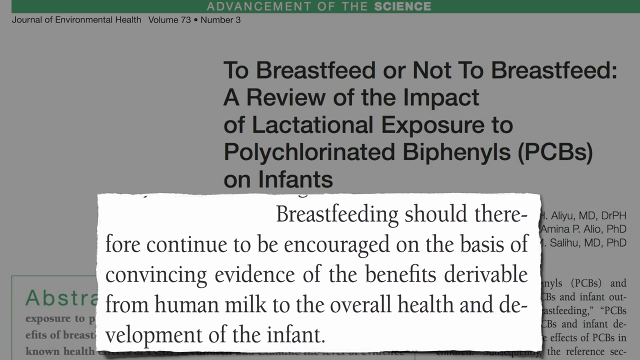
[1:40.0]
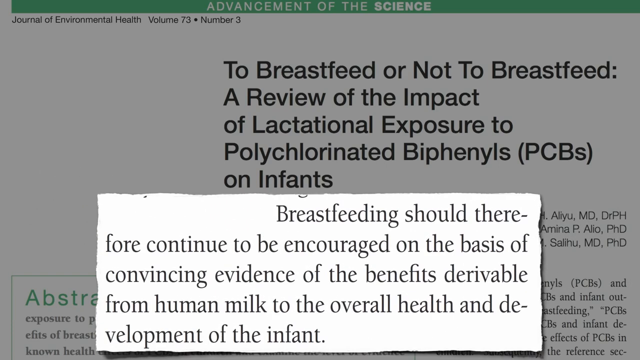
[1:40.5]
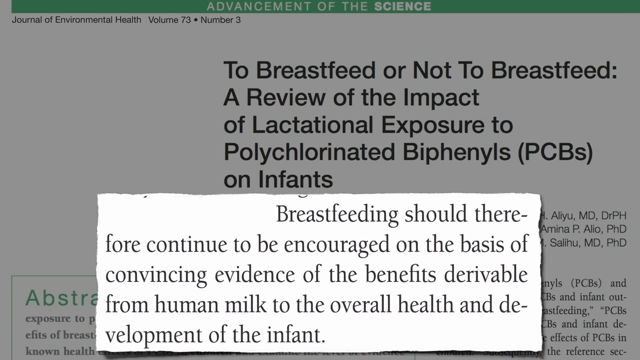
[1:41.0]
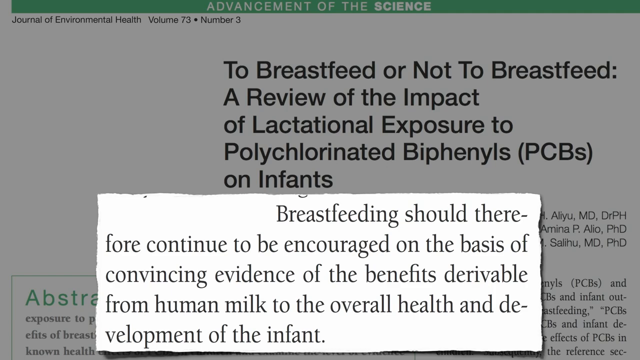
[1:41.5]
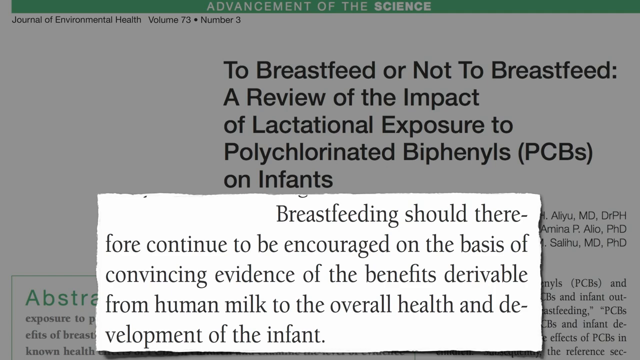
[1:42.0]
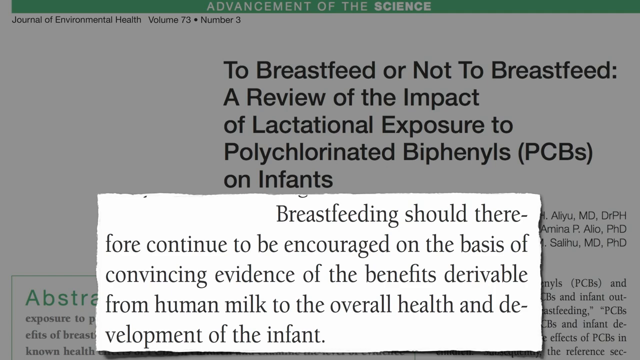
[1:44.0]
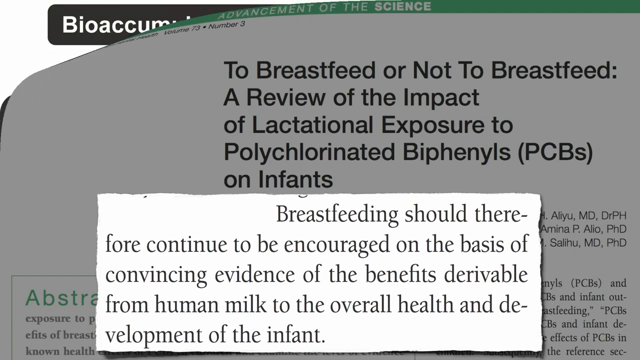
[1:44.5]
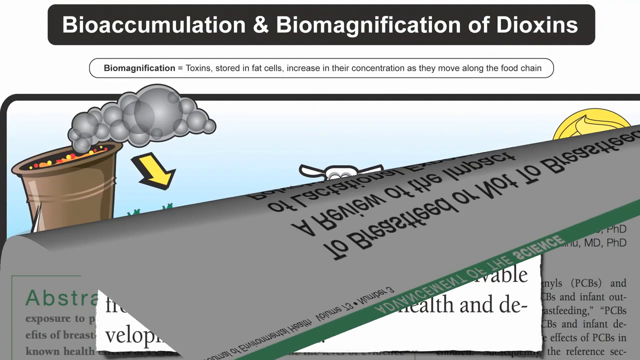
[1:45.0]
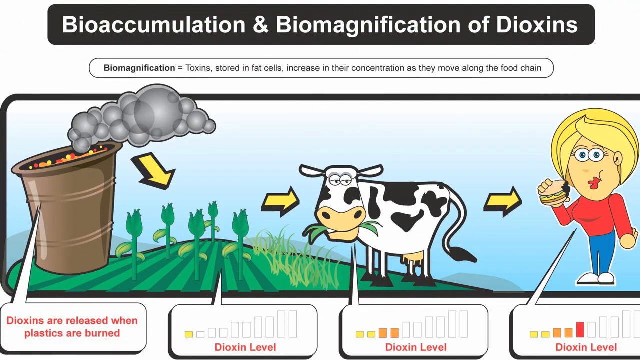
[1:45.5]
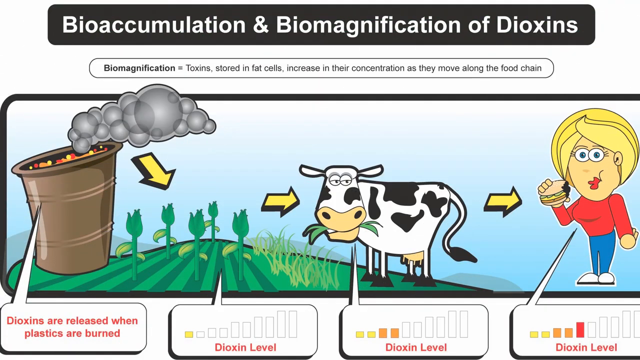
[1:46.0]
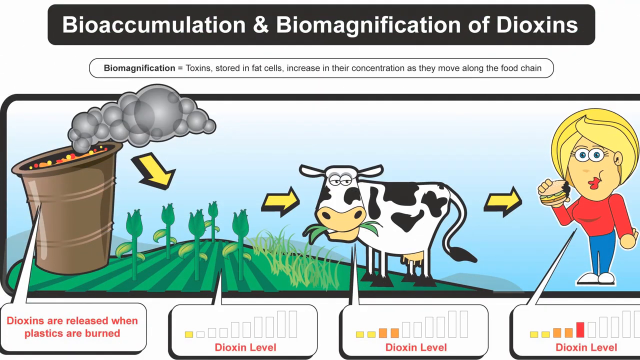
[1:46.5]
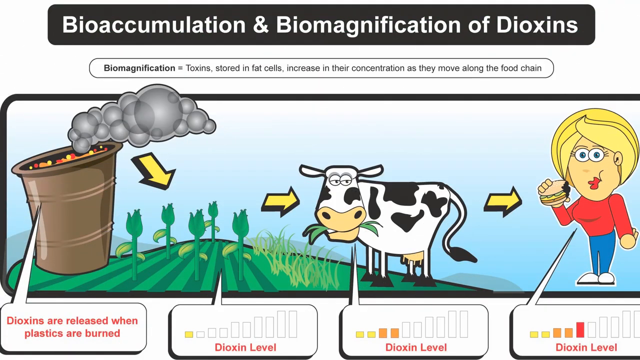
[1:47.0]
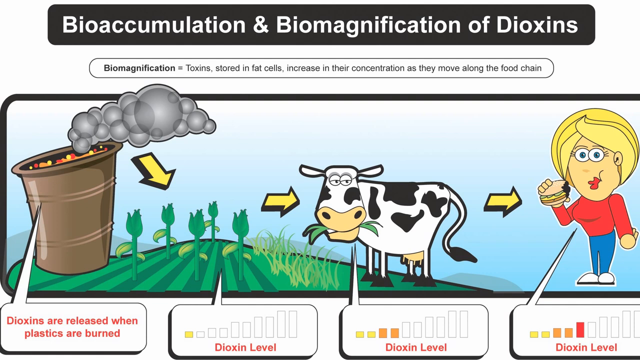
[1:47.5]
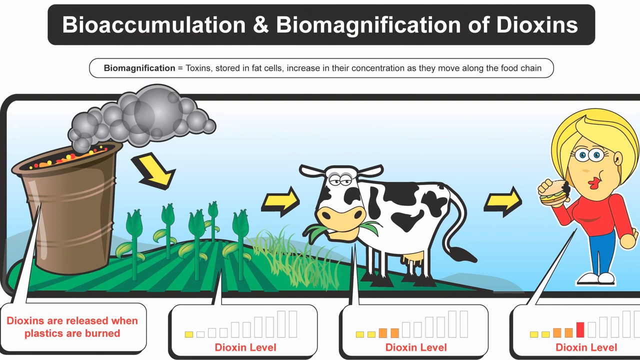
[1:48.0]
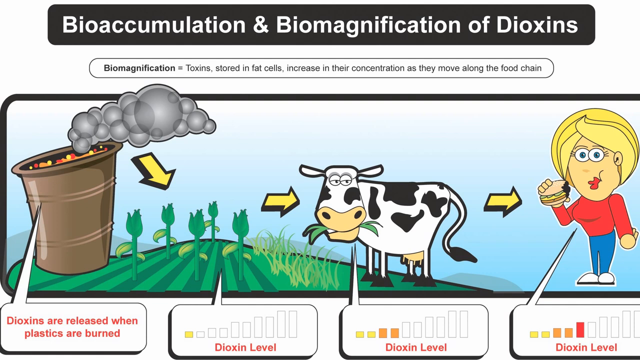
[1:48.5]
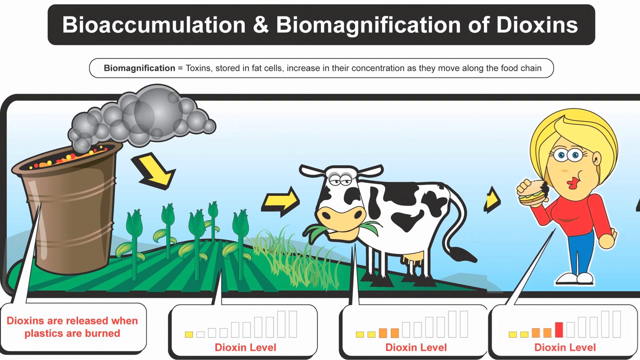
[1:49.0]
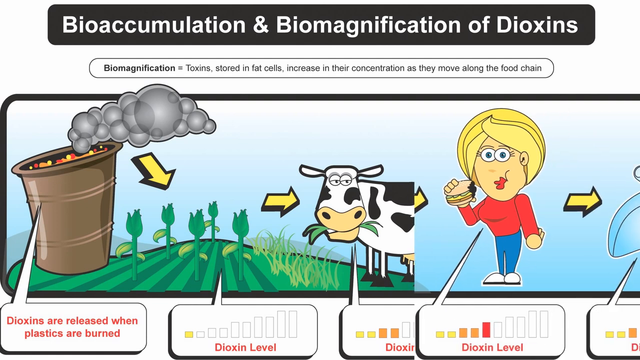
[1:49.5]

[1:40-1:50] Across the top of a white screen is the text "to breastfeed or not to breastfeed a review of the impact of lactational exposure to polychlorinated biphenyls on infants." Underneath is a small, bright or white article that reads "breastfeeding should therefore continue to be encouraged on the basis of convincing evidence of the benefits derivable from human milk to the overall health and development of the infant." It then cuts to a cartoon. A black-and-white cartoon cow stands on a green hill with green grass in its mouth. In front of the cow is a bucket with smoke coming out of it. Behind the cow, on the right side of the screen, is a picture of a woman with blonde hair, holding a hamburger in her right hand up to her face and wearing a long-sleeved red shirt, blue pants and white shoes.